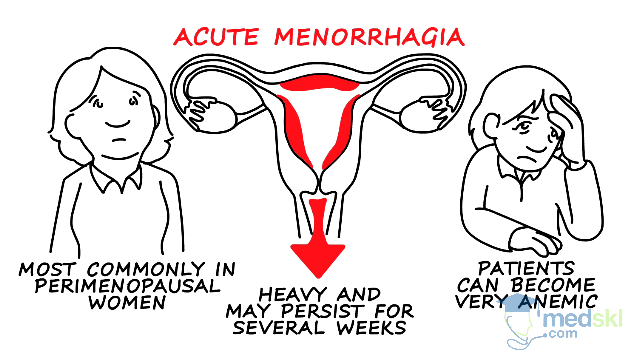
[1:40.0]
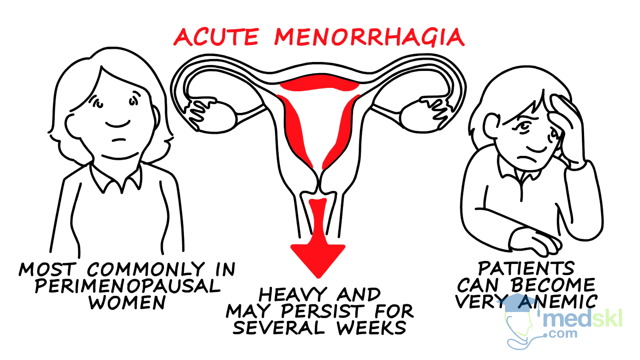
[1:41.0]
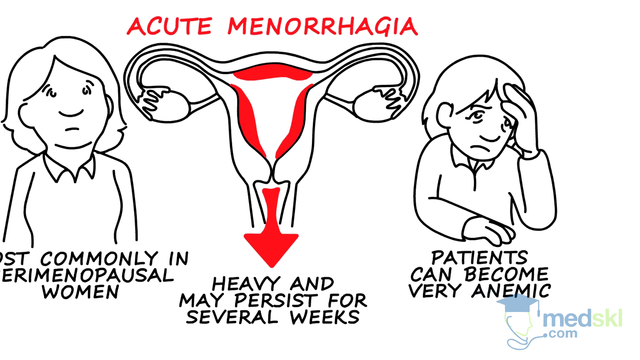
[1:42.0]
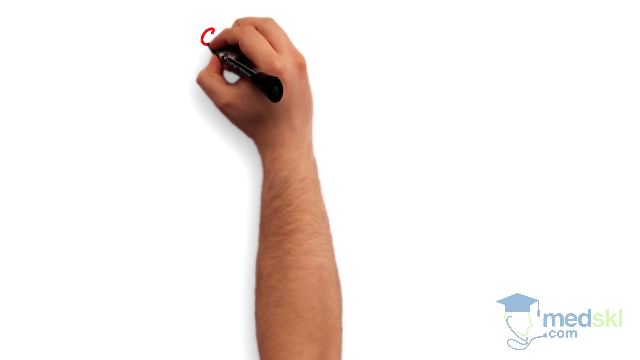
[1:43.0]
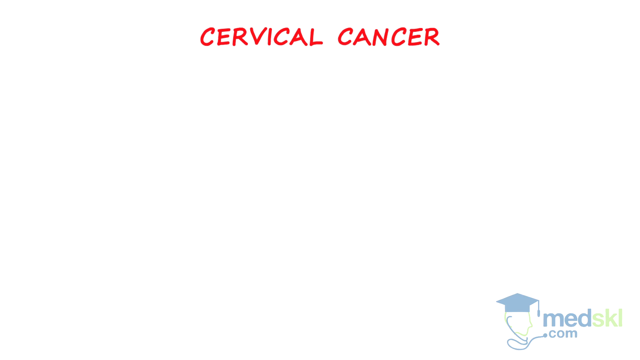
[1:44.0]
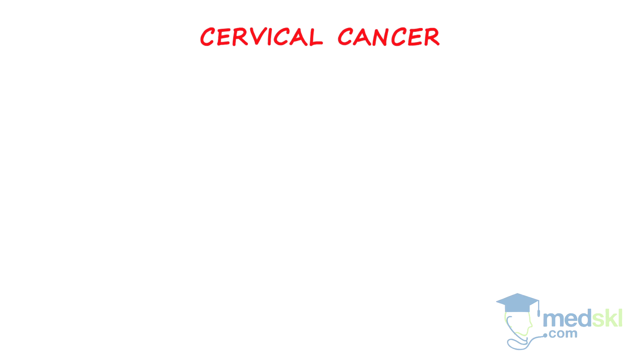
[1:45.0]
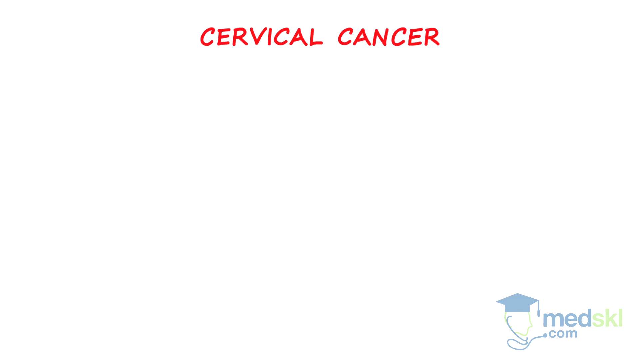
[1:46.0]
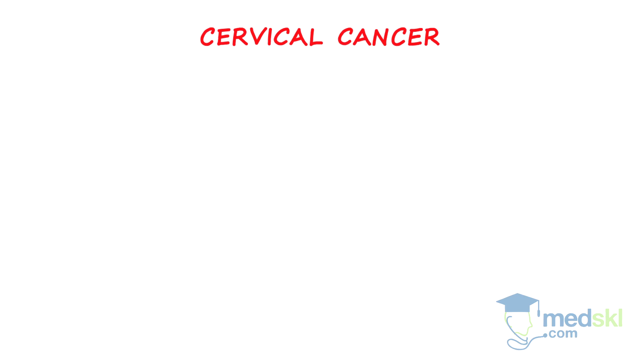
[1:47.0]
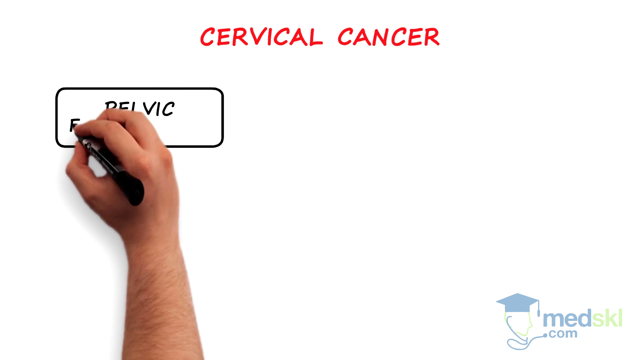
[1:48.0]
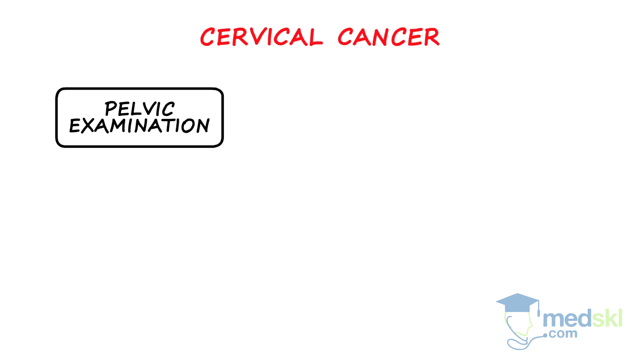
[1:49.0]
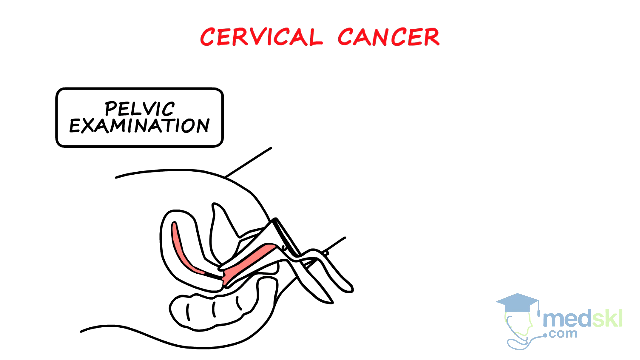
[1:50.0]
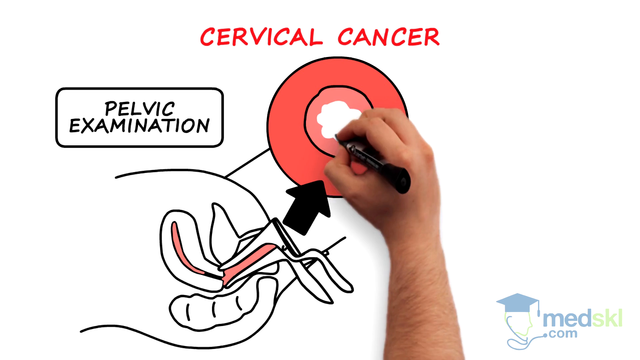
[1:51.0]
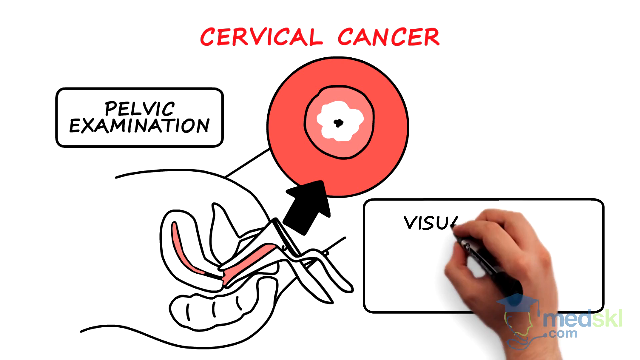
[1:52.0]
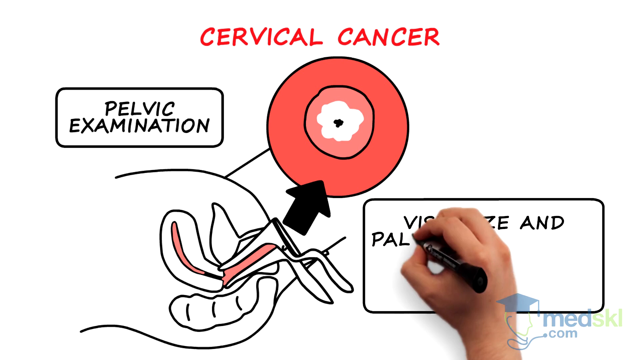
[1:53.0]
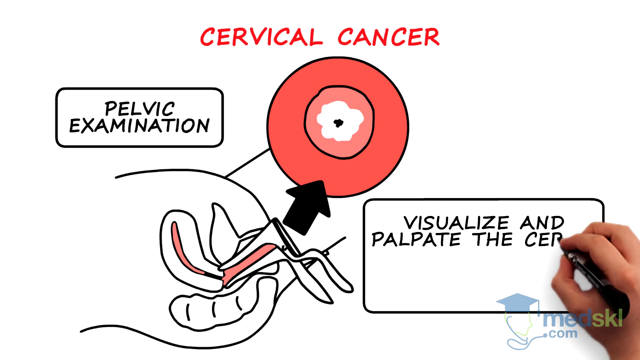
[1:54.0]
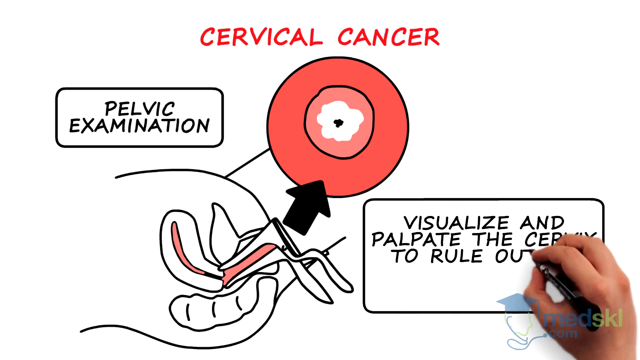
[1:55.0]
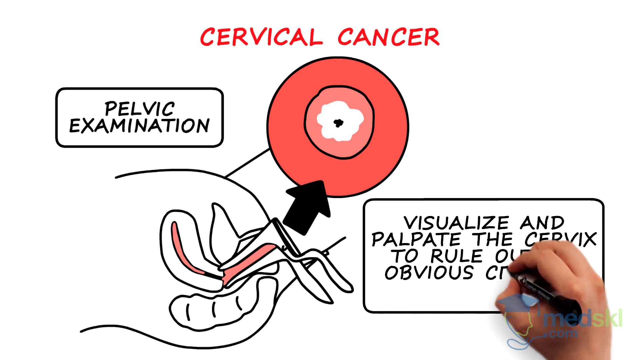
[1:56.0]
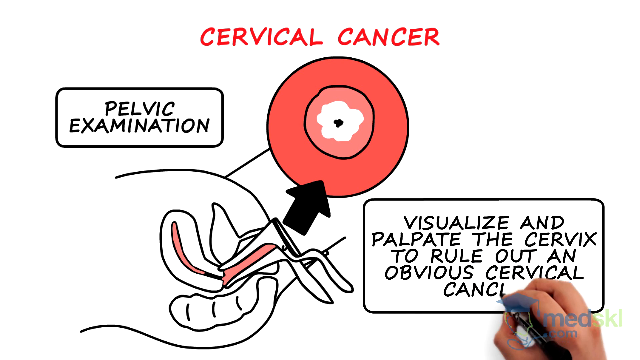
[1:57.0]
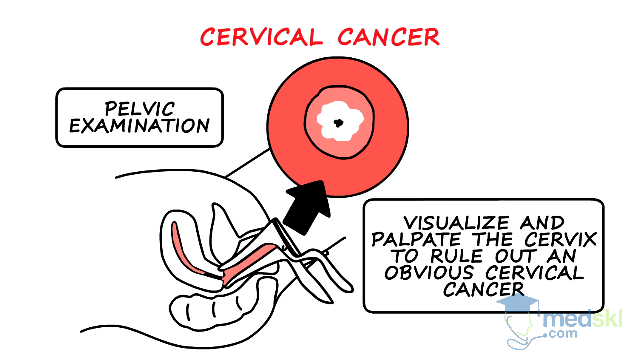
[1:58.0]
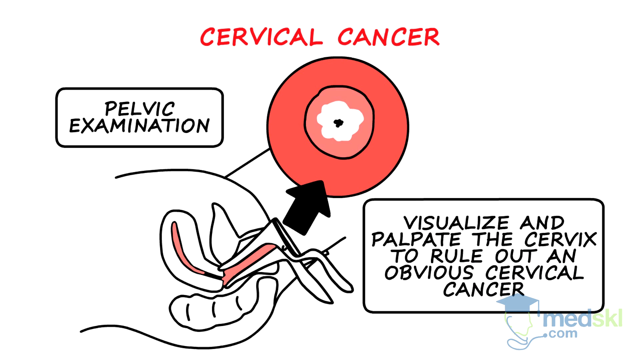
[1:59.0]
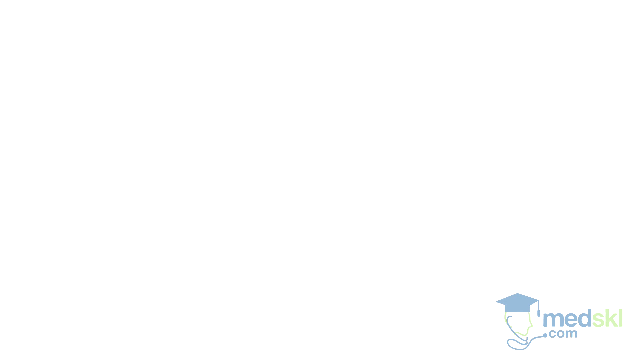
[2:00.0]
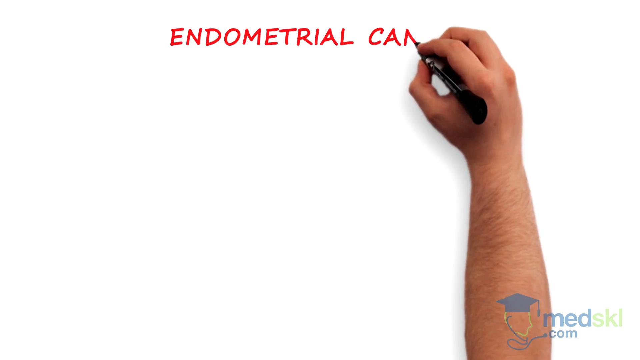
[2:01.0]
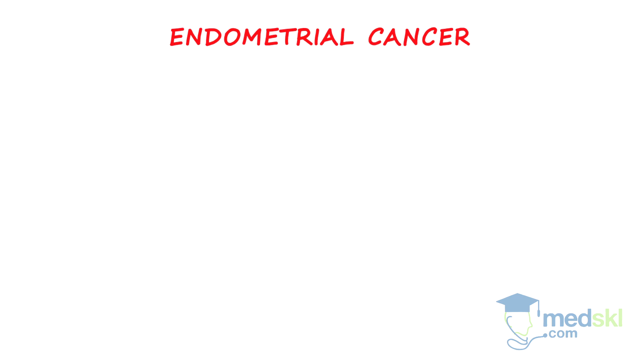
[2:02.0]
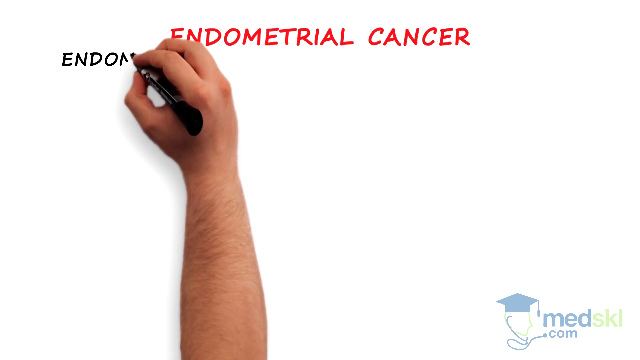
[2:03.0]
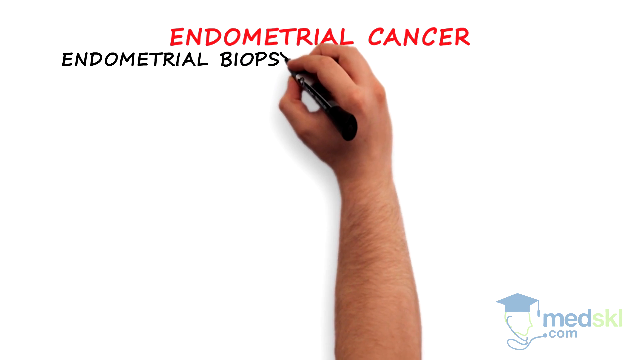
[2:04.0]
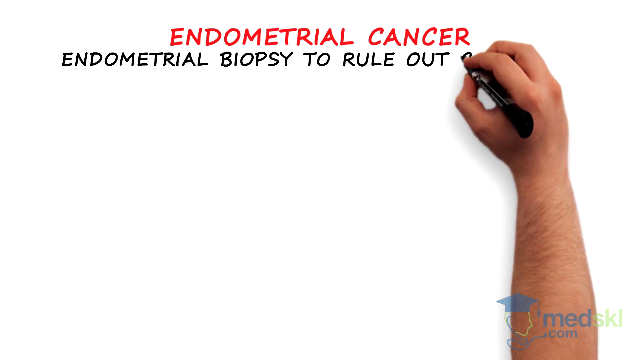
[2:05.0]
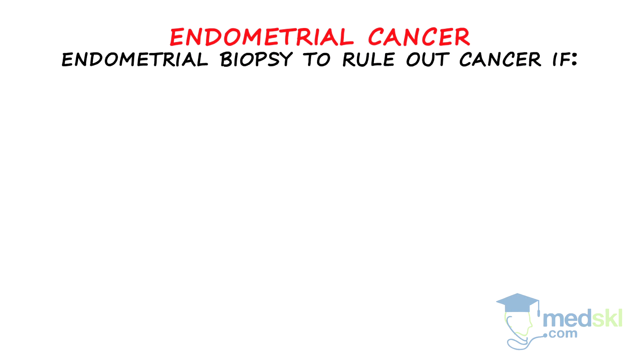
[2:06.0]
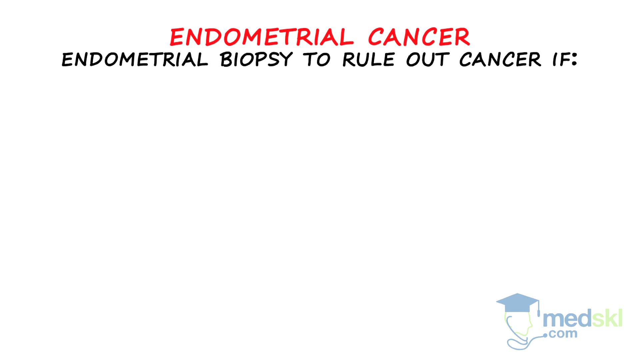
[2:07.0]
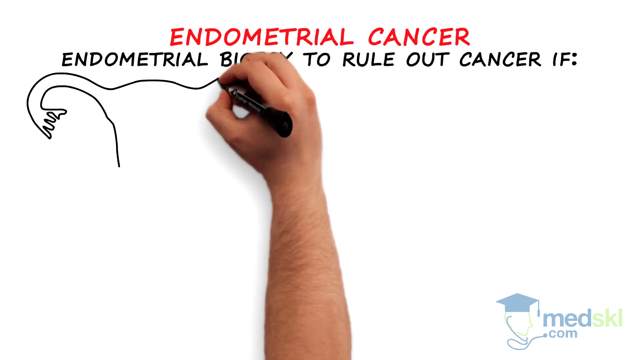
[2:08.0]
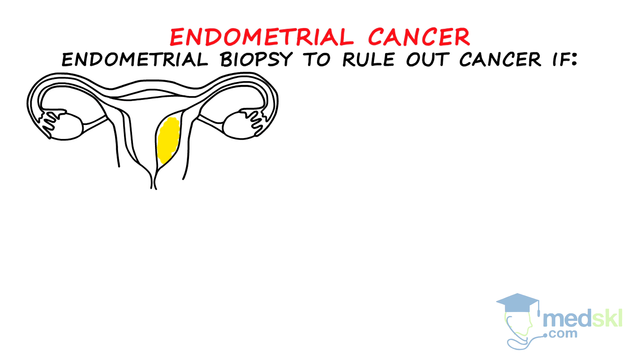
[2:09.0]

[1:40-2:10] The view moves to the bottom right, and the hand writes "cervical cancer" at the top in red letters. It writes "pelvic examination," draws an instrument entering the female uterus, and in the center draws what looks like a view of the uterus as seen through this instrument. In the bottom right corner it writes "visualize and palpate the cervix to rule out an obvious cervical cancer." The view then shifts to the right onto a blank screen, where the hand writes the title "endometrial cancer" at the top, followed by "endometrial biopsy to rule out cancer if." It draws another uterus on the left side, shades the right side of the uterus yellow, and begins writing information on the lower left side.